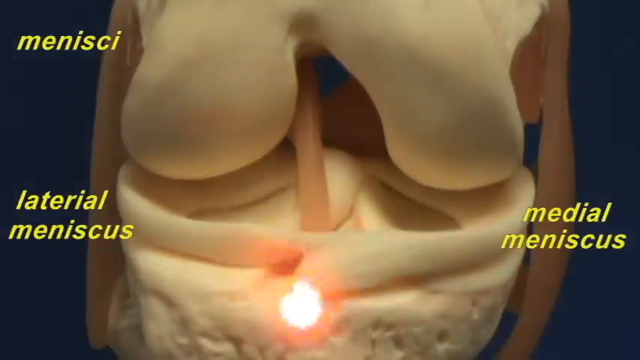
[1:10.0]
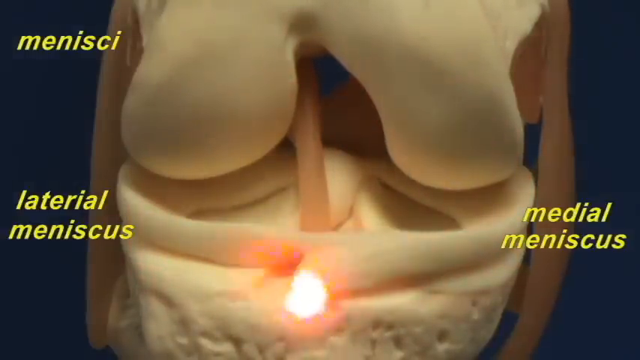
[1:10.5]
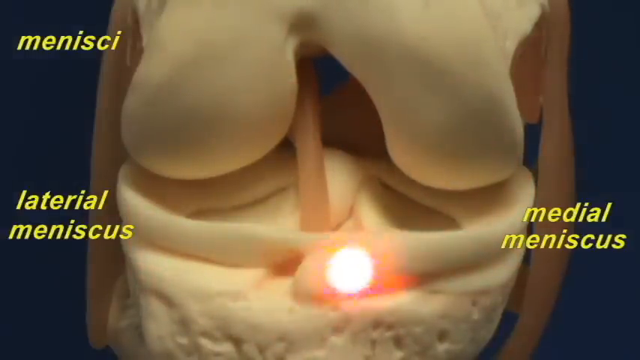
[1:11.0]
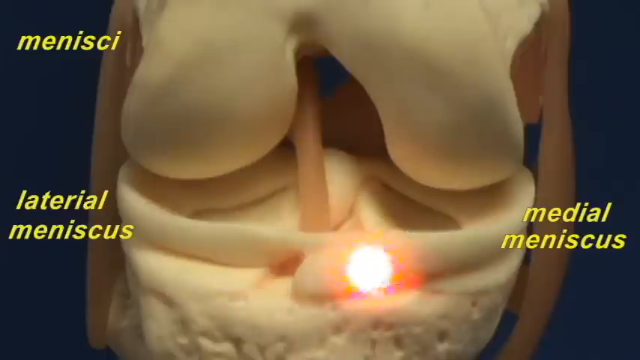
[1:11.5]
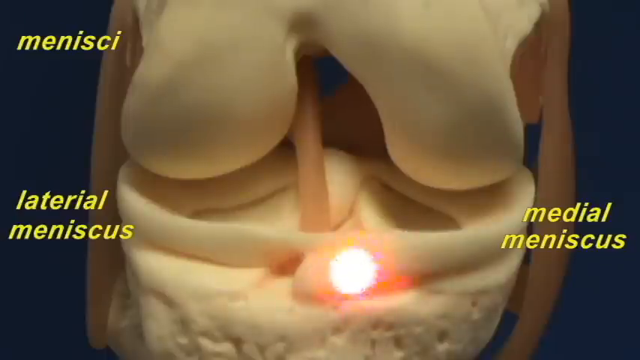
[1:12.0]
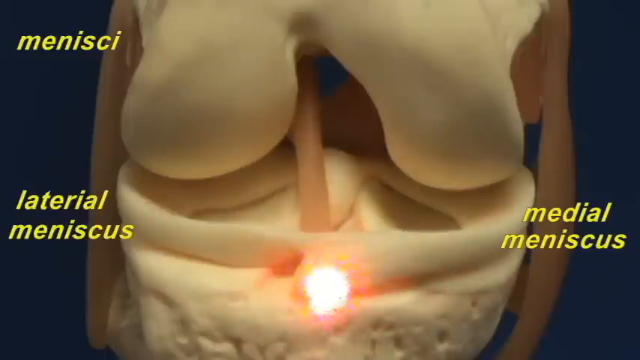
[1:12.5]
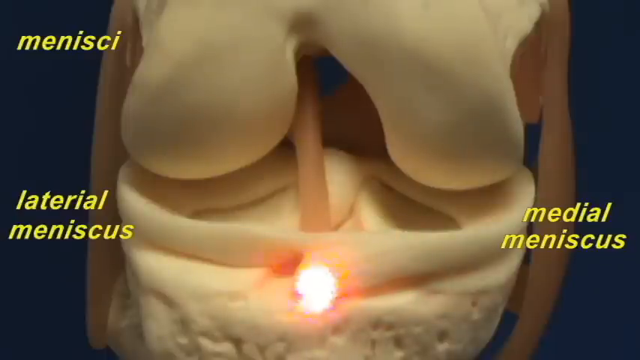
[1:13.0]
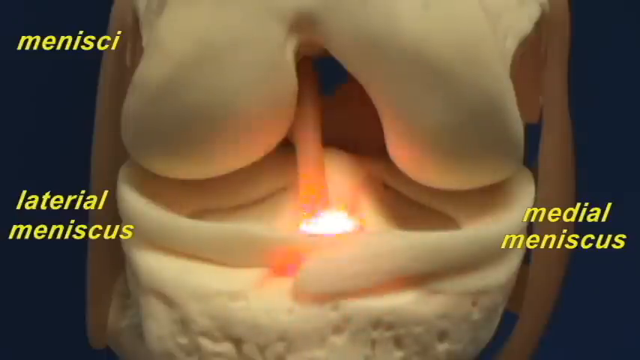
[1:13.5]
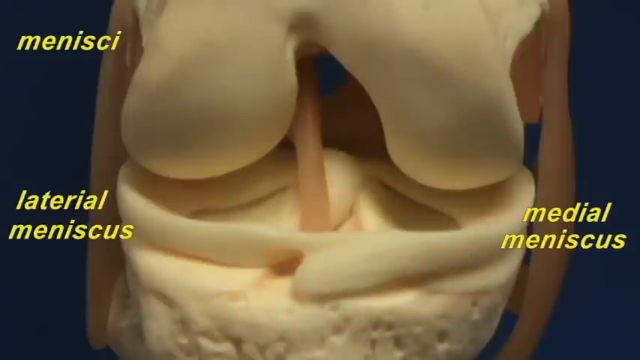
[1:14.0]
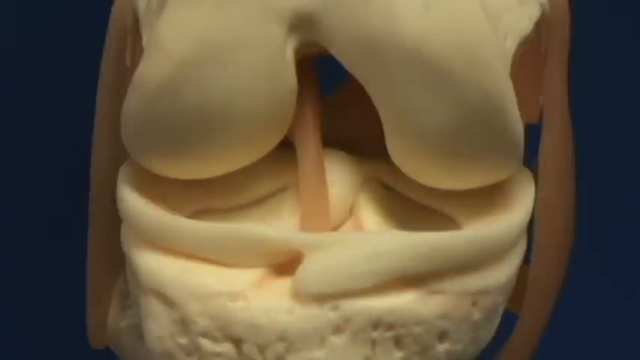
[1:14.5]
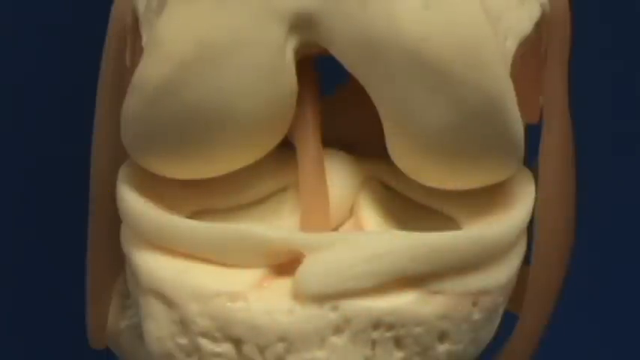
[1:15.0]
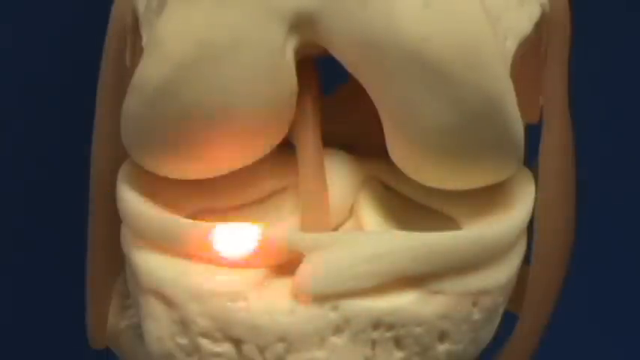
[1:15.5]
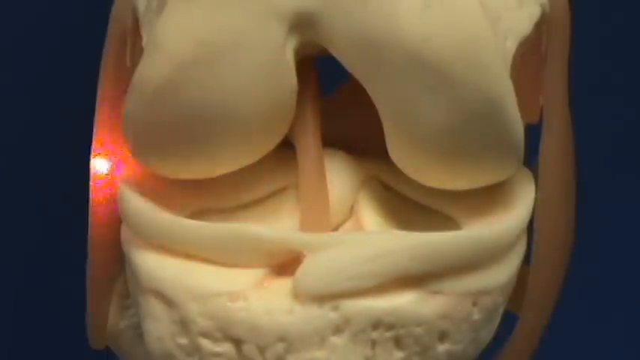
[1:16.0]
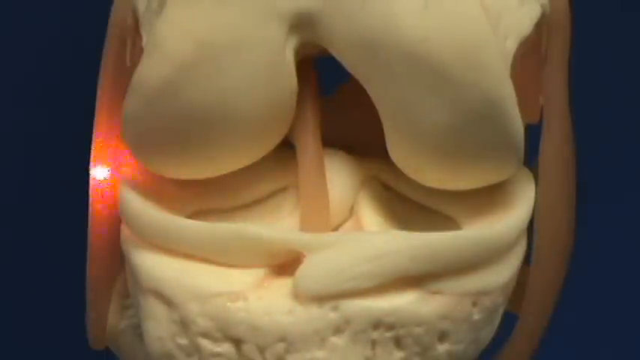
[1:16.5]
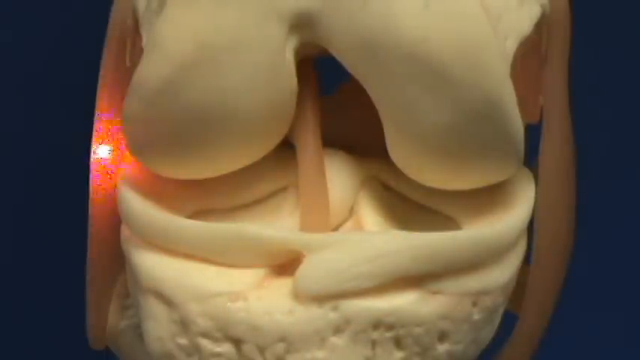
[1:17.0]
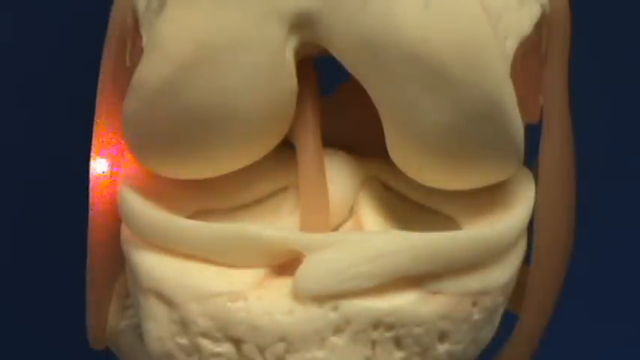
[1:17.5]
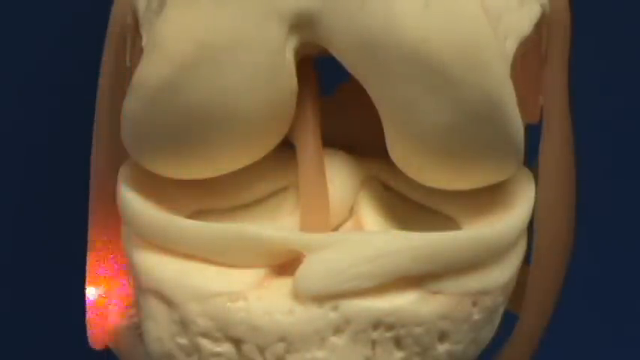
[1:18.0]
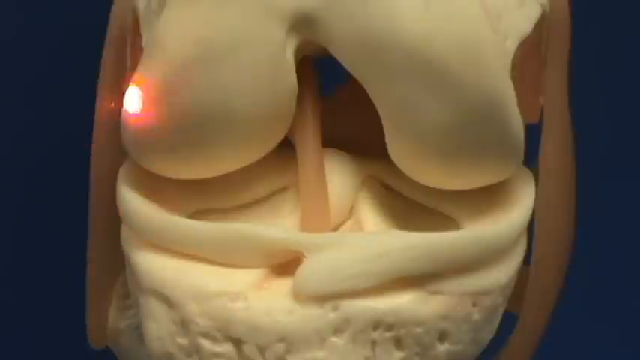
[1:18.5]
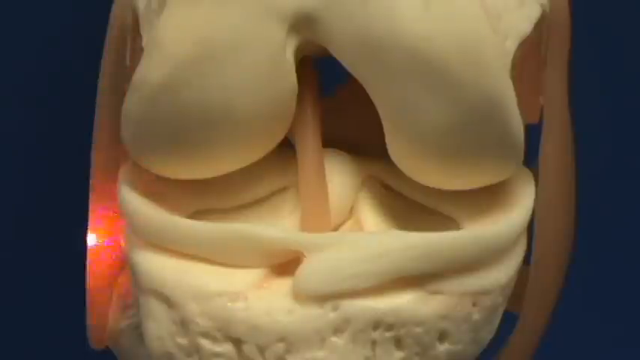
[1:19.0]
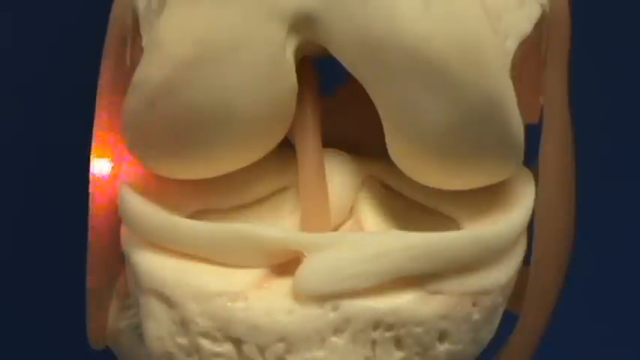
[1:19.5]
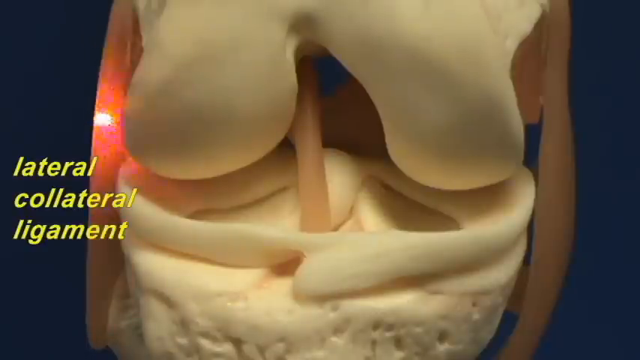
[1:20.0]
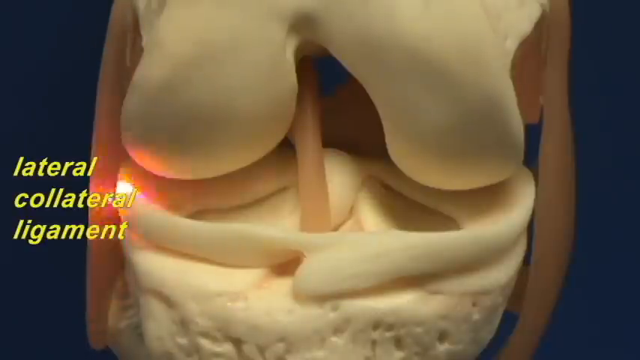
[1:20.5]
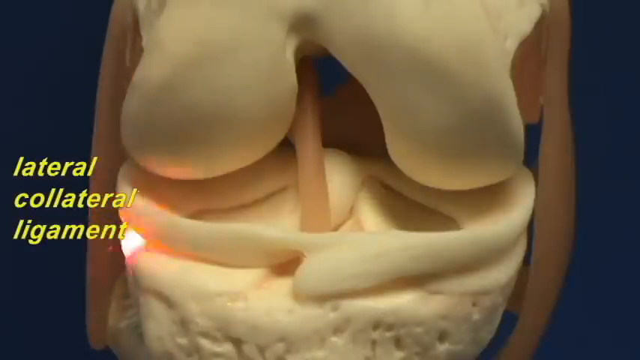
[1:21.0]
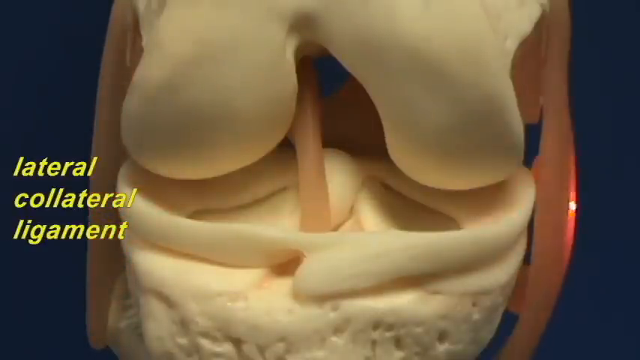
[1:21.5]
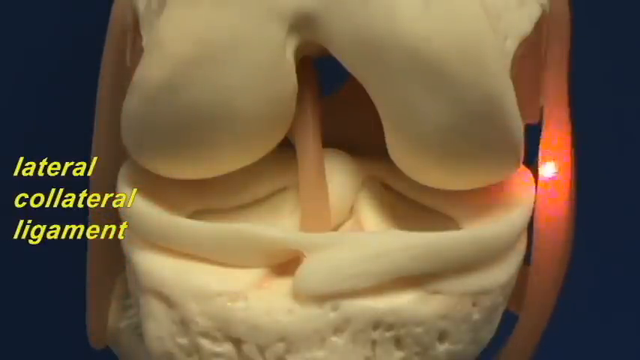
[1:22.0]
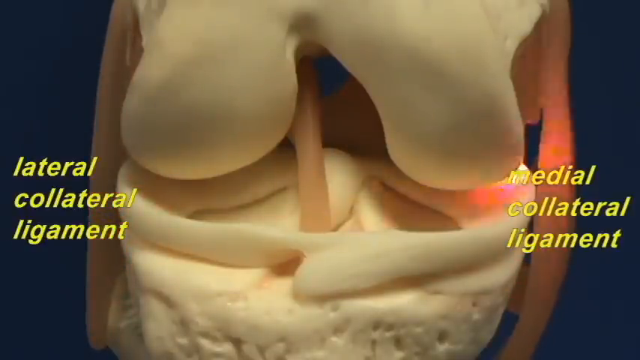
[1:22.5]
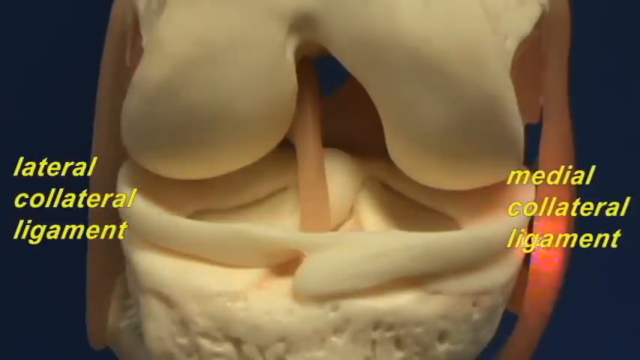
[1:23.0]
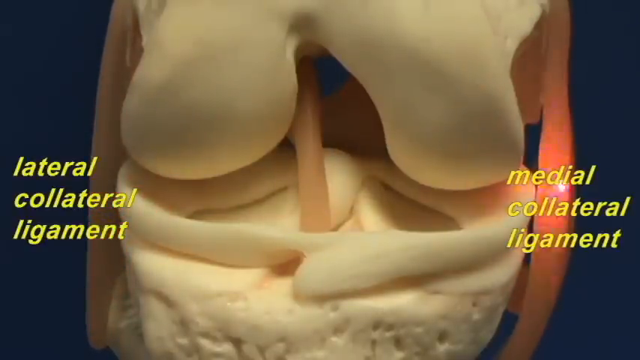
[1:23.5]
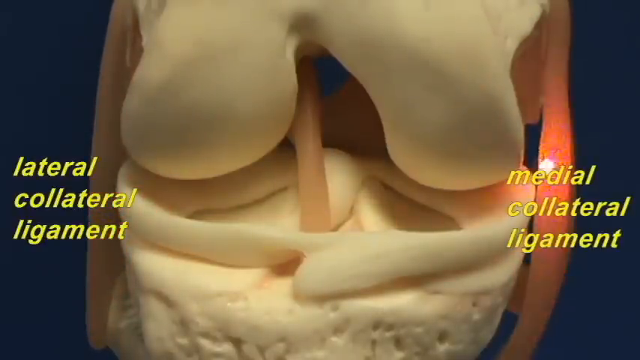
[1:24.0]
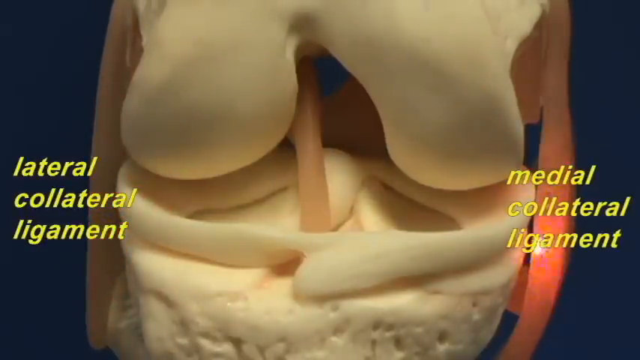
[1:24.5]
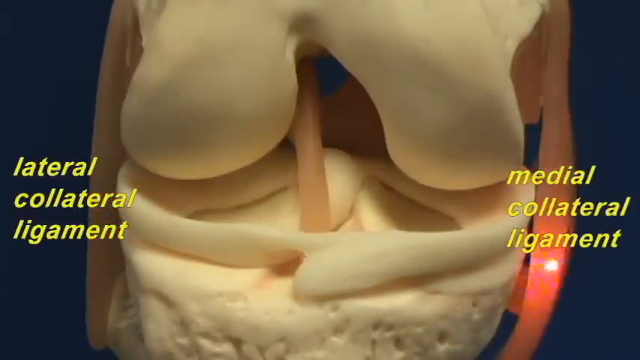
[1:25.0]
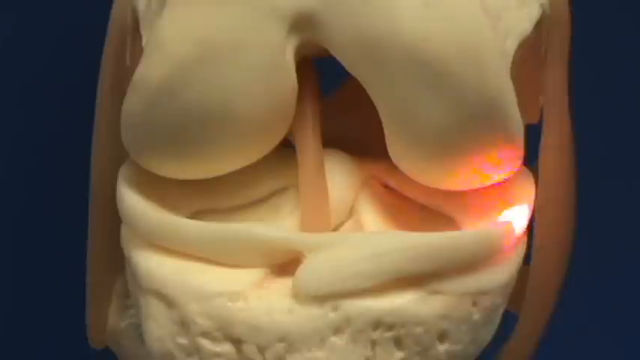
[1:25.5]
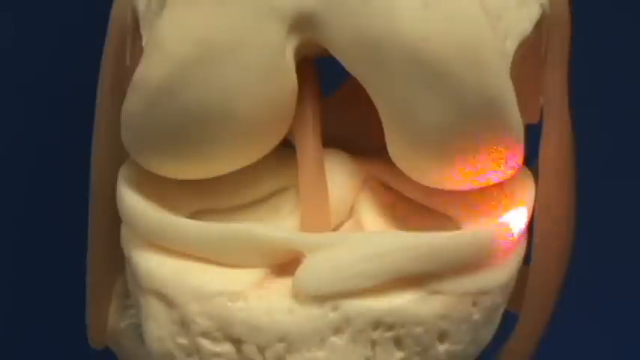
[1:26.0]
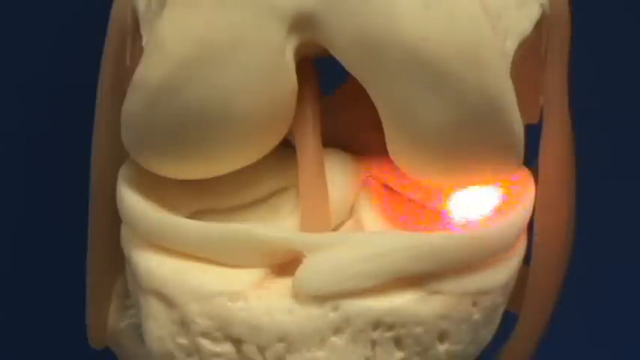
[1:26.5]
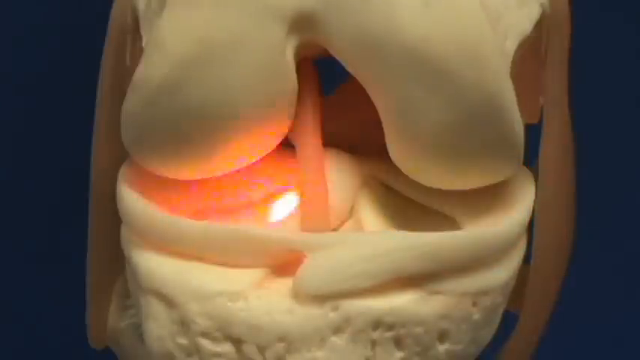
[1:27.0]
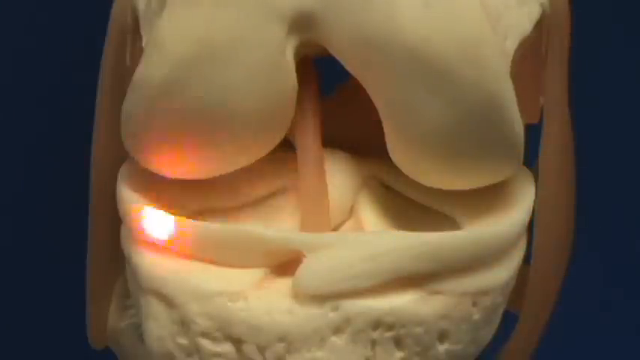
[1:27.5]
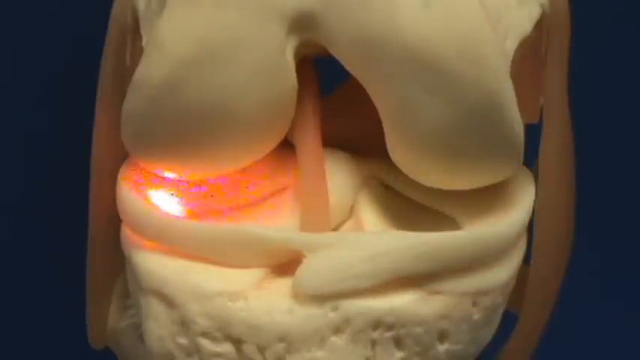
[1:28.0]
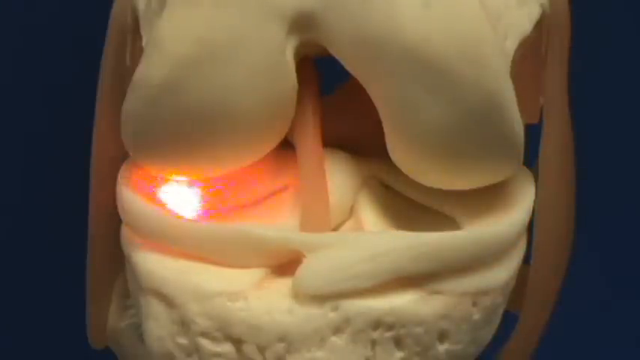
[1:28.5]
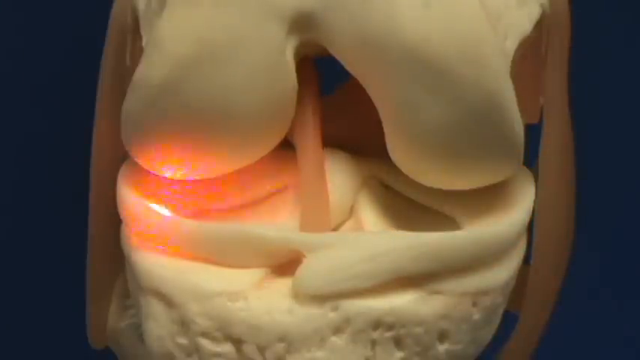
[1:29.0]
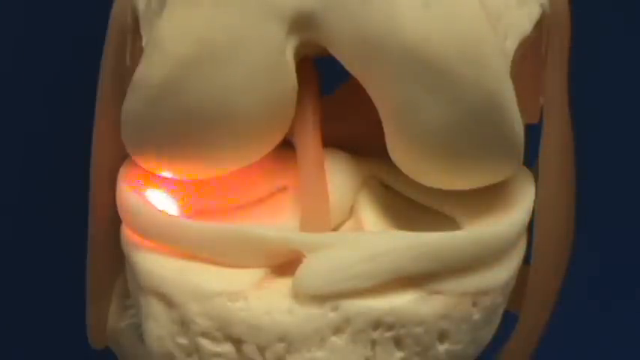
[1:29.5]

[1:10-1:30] The doctor stays on the medial meniscus and the lateral meniscus for a few more seconds, slowly tracing them with the laser pointer. He also uses the laser pointer to trace the lateral collateral ligament and the medial collateral ligament, large bands of tissue at each side of the bone structures of the knee, slowly tracing them up and down. He also points at the parts of the bone structure that connect to or touch these two collateral ligaments.